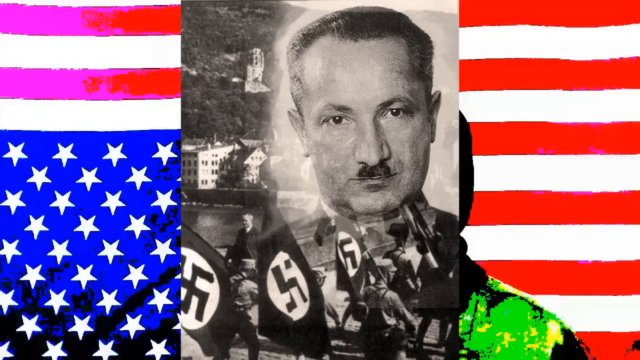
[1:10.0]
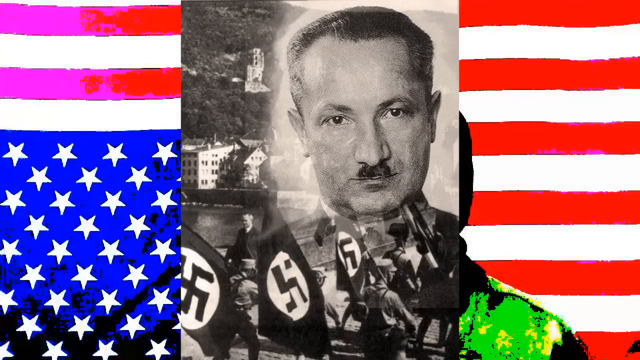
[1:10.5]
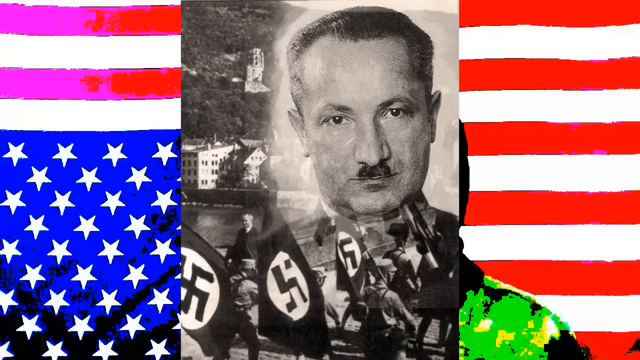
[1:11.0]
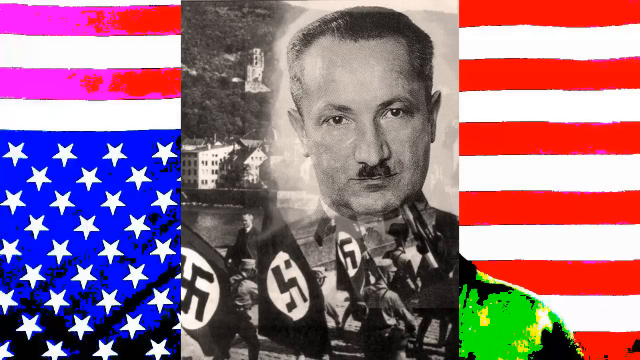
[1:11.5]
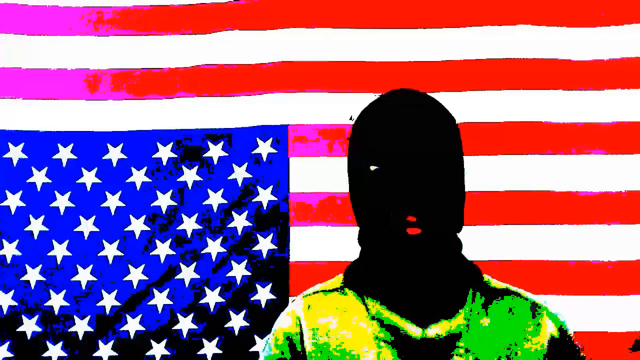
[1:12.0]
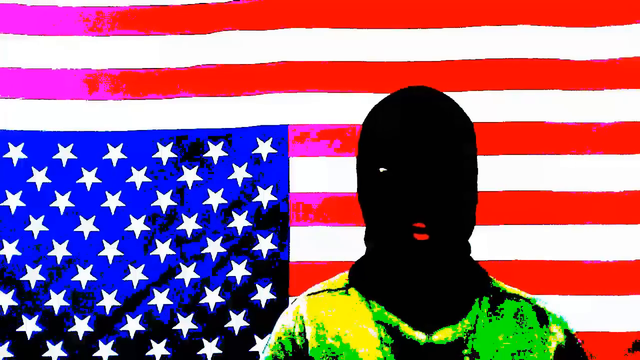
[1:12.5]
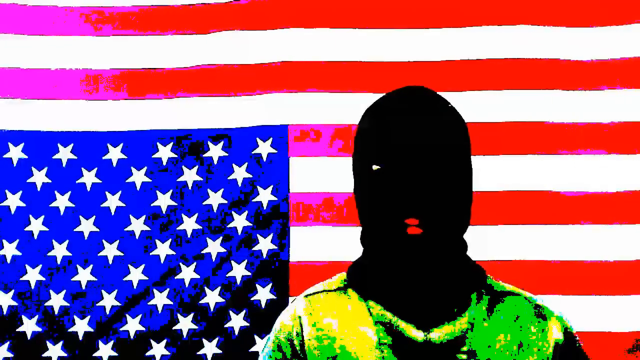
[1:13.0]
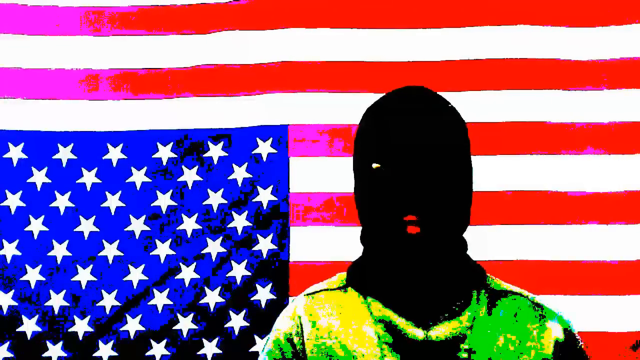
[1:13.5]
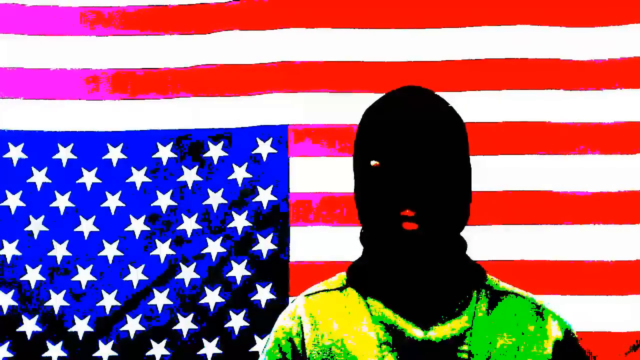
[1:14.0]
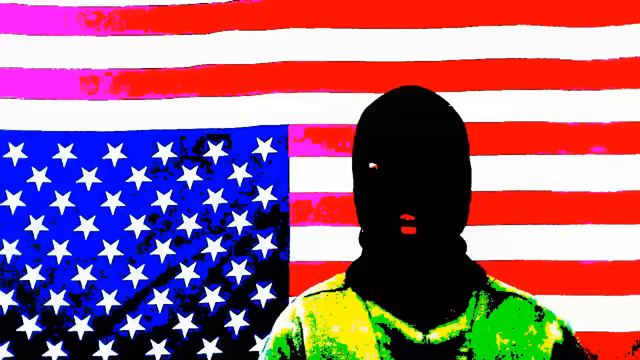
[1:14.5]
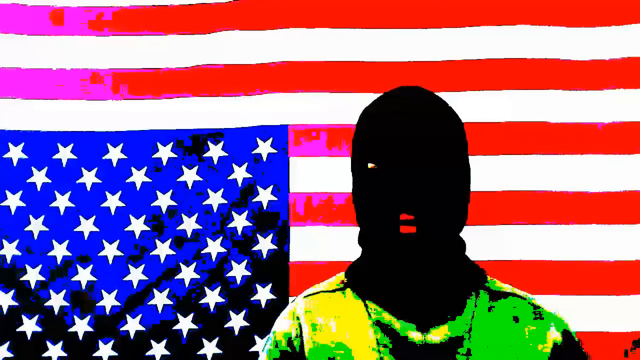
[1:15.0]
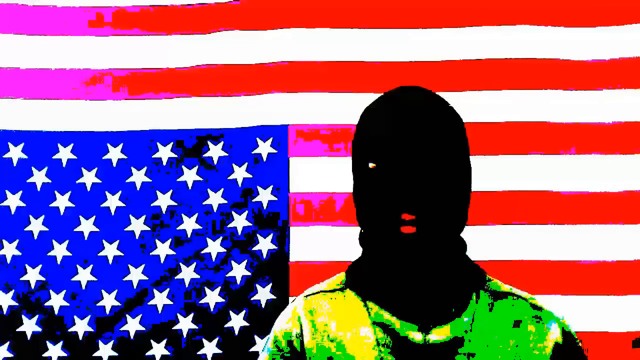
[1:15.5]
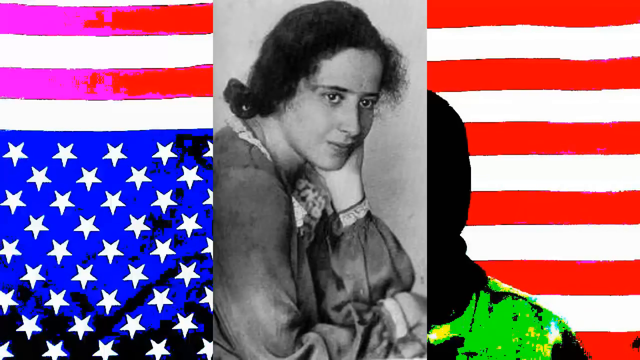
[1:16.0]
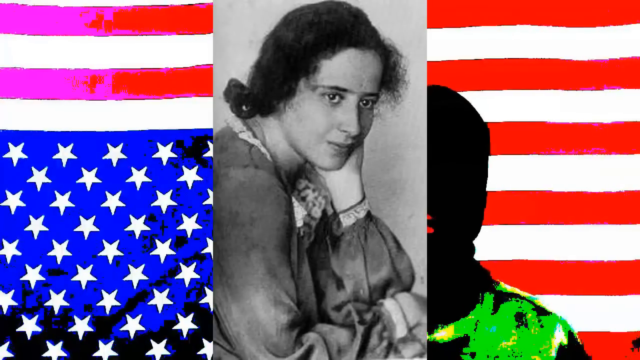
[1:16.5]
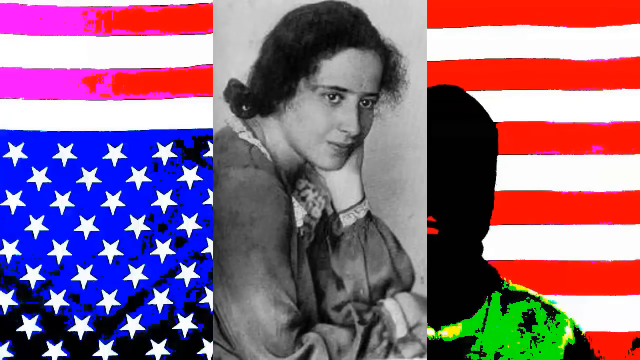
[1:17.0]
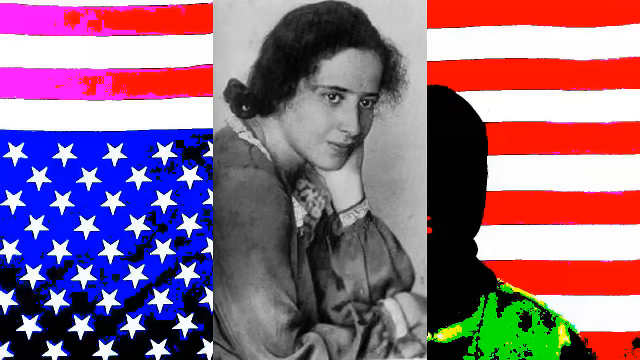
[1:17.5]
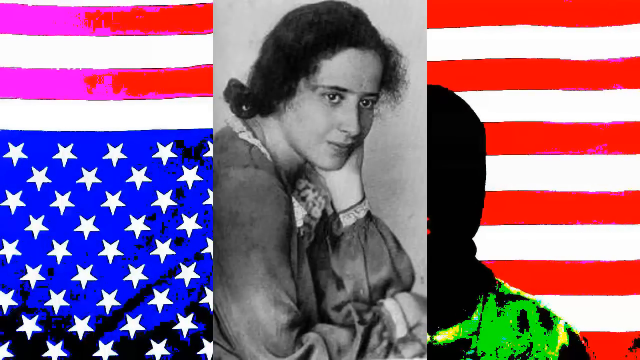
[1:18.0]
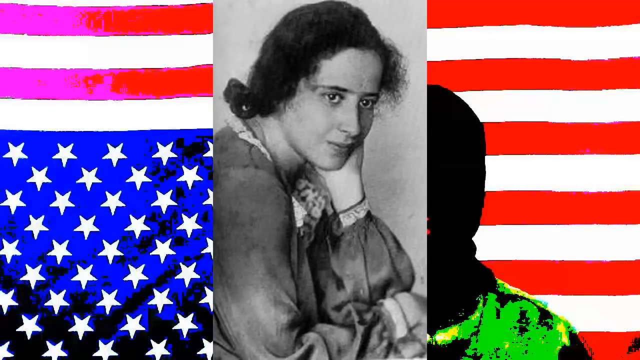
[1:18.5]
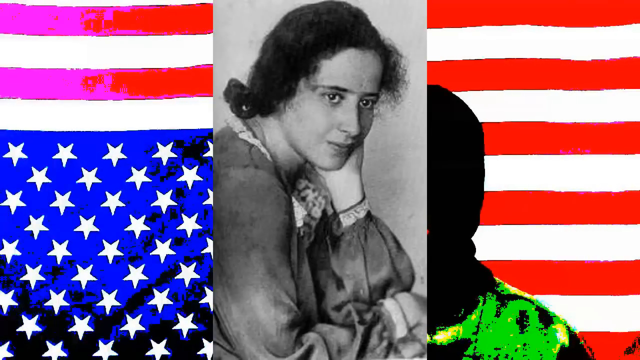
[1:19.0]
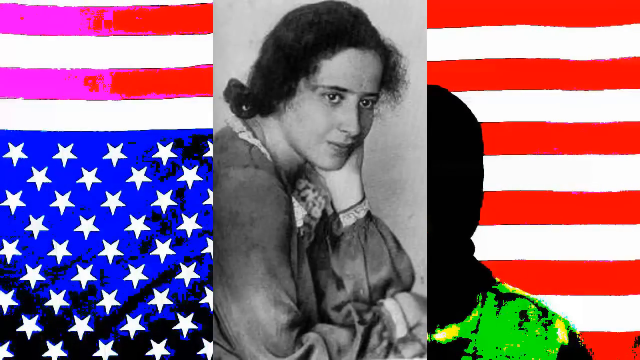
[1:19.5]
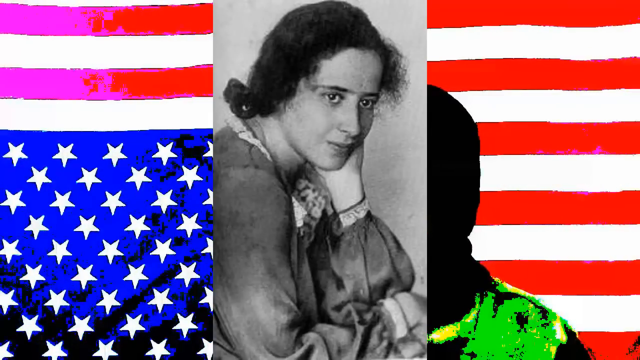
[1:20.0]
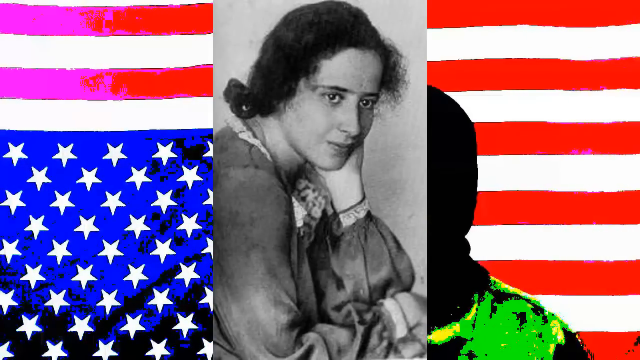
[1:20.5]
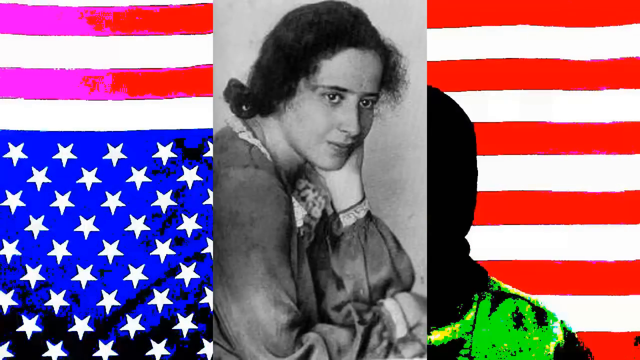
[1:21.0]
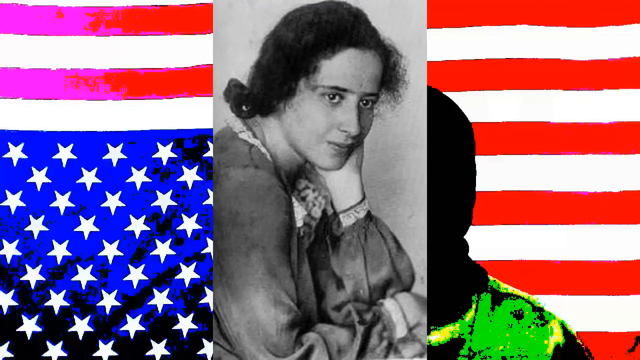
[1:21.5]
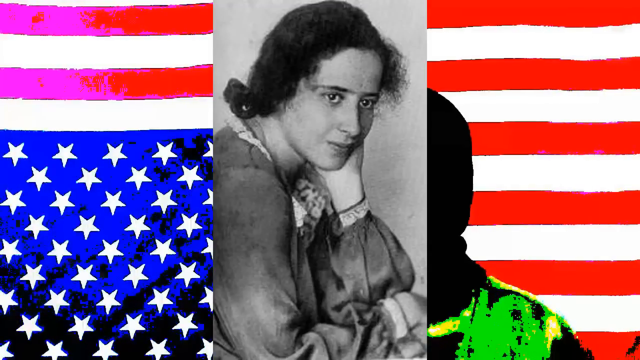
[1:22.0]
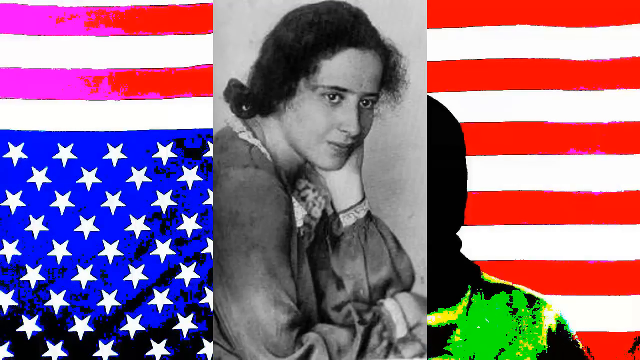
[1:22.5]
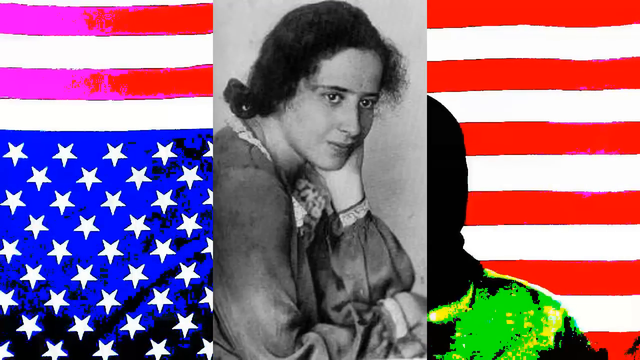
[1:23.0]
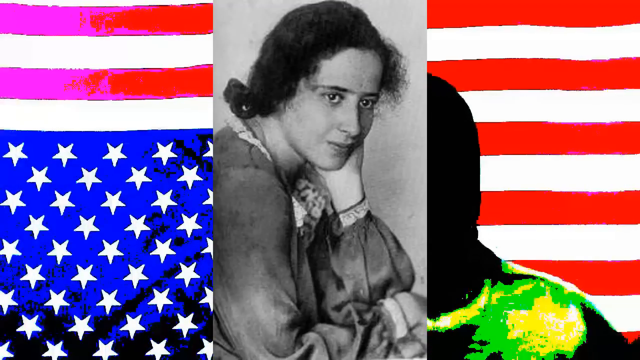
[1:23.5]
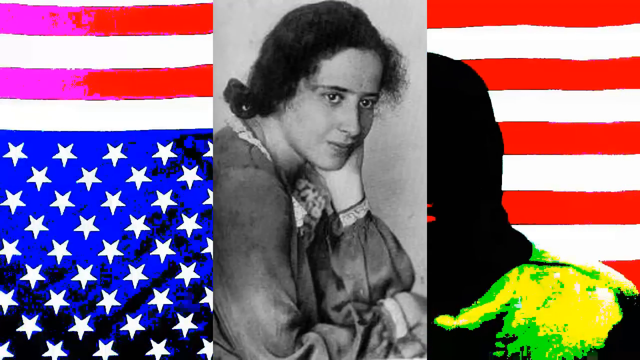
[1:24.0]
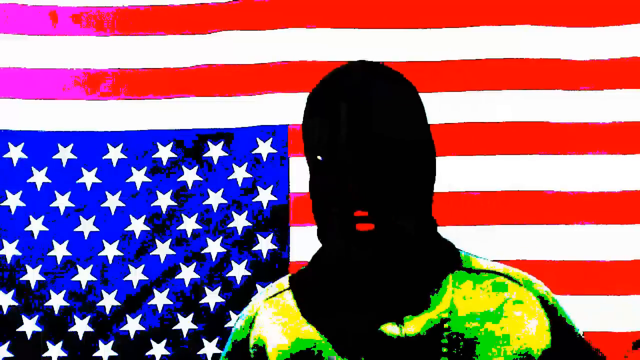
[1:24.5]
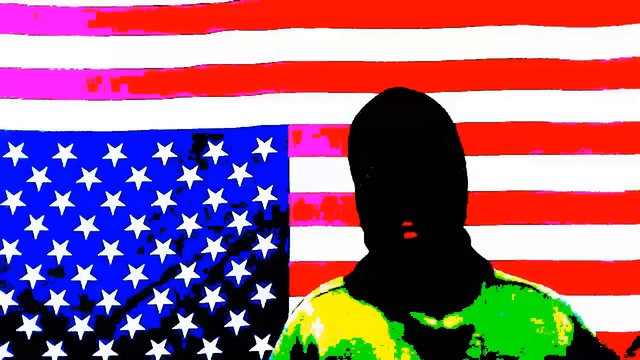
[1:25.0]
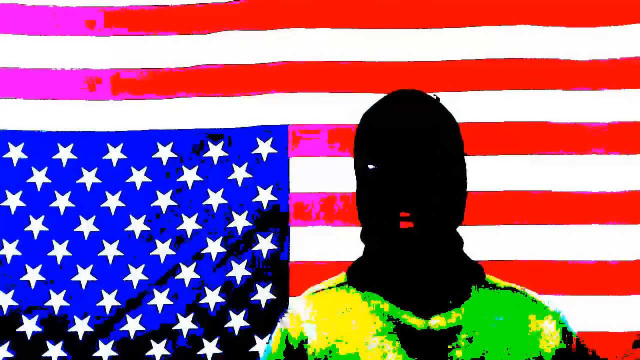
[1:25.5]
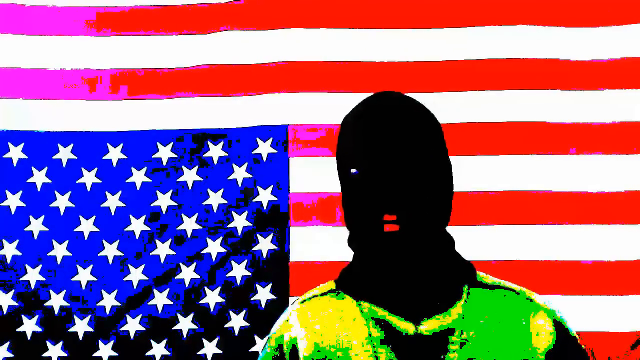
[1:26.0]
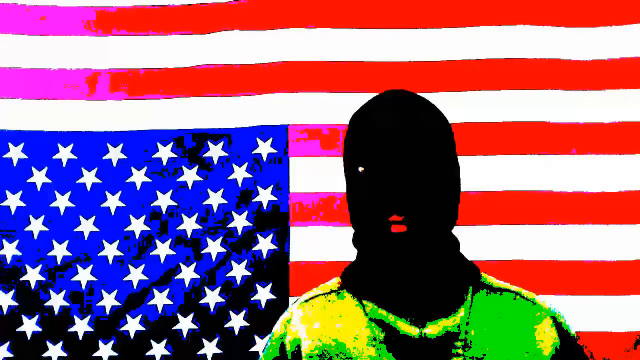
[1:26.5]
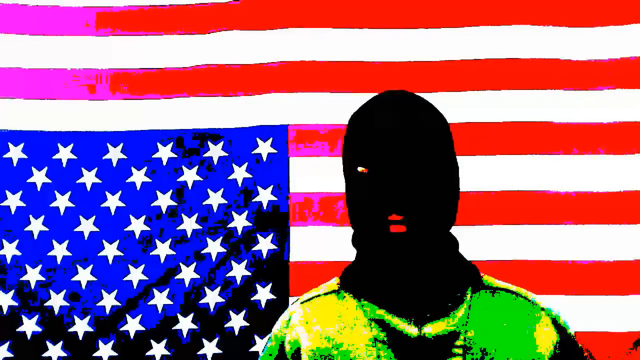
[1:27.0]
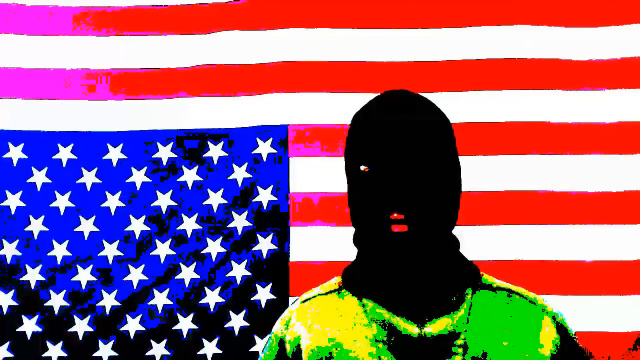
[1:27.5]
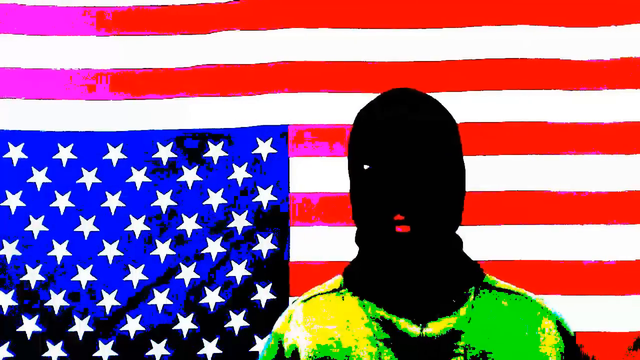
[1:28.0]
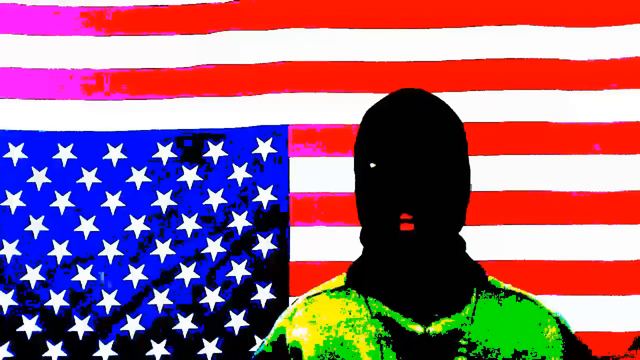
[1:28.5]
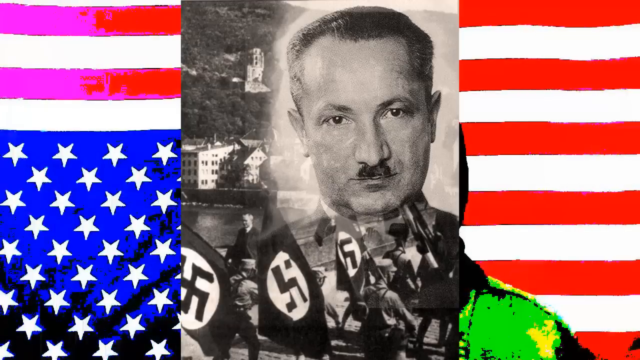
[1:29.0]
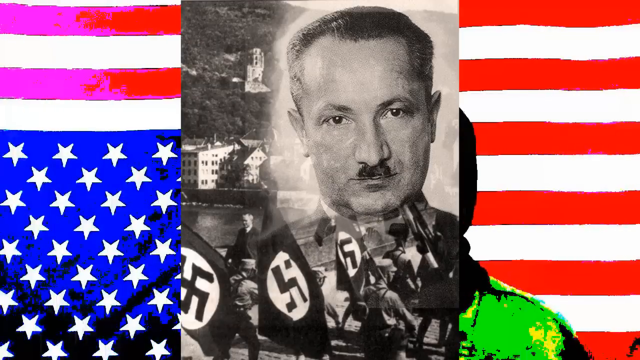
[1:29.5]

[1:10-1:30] A black-and-white image of a man with a Nazi mustache is superimposed on a photo of numerous Nazi flags along a waterfront, with a building on the hill and a couple of buildings by the water in the background. Next comes the man in the black ski mask, with only his eyes and mouth visible, in front of an upside-down American flag whose colors change on the left side. The video cuts to a black-and-white image in the center of a posing woman with dark hair, wearing a baggy shirt adorned at the wrists and collar. The image of the man with the Hitler mustache then appears again.